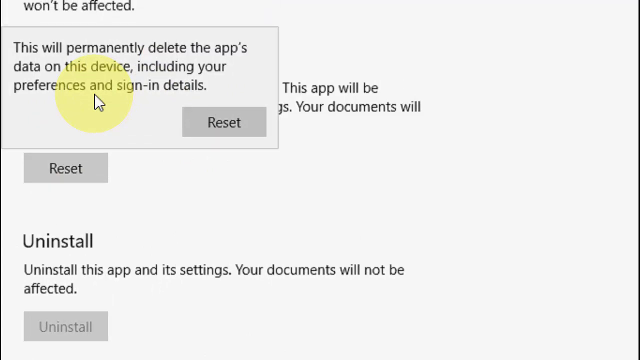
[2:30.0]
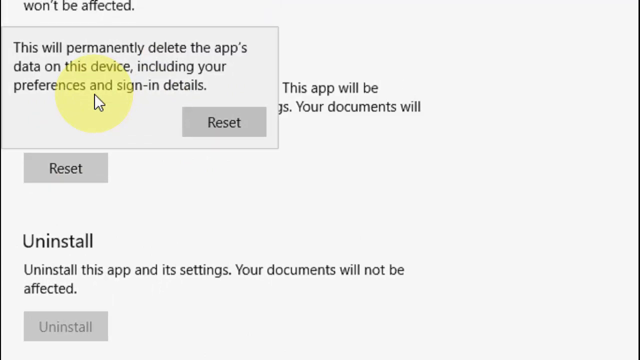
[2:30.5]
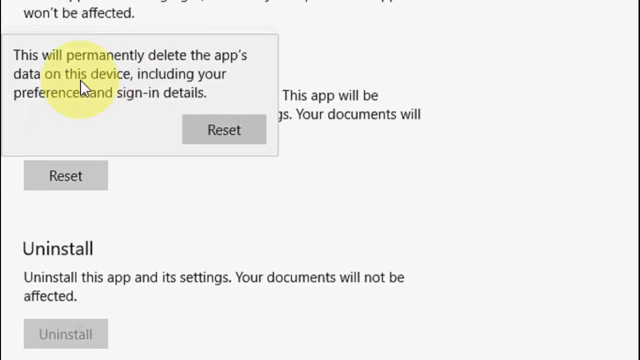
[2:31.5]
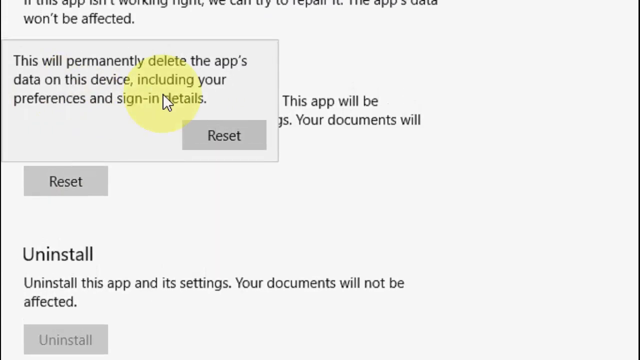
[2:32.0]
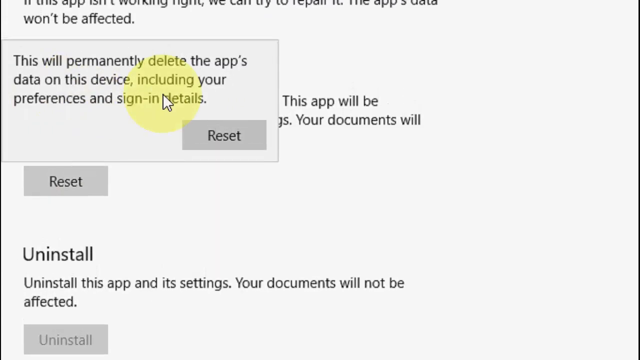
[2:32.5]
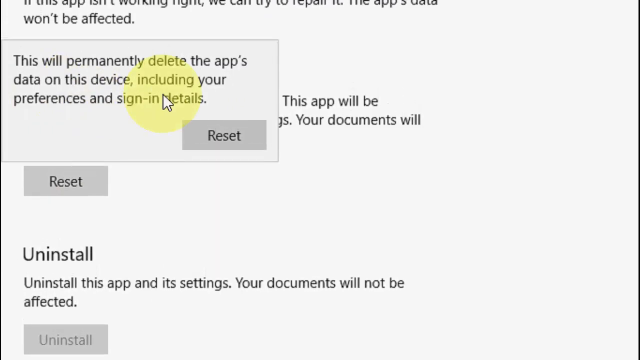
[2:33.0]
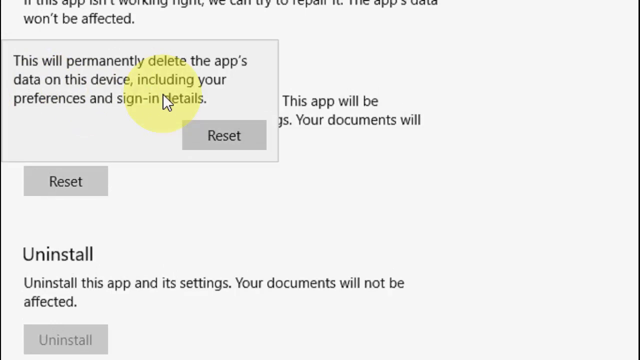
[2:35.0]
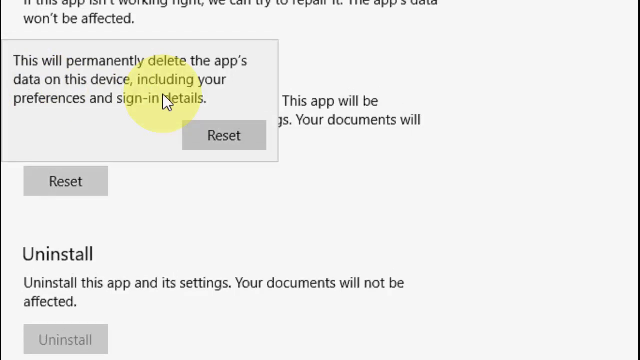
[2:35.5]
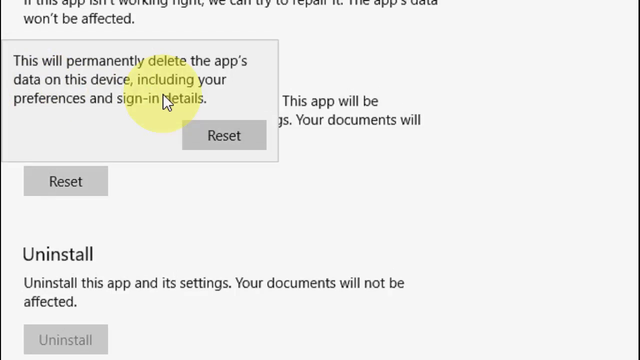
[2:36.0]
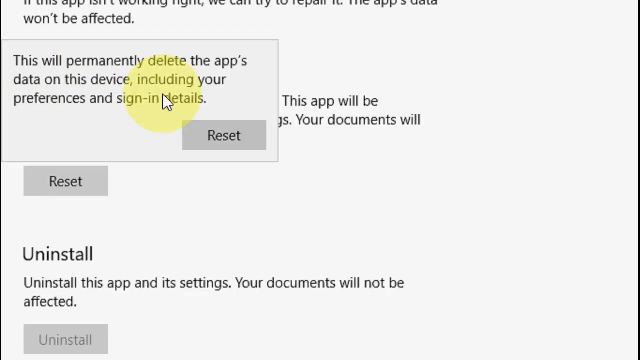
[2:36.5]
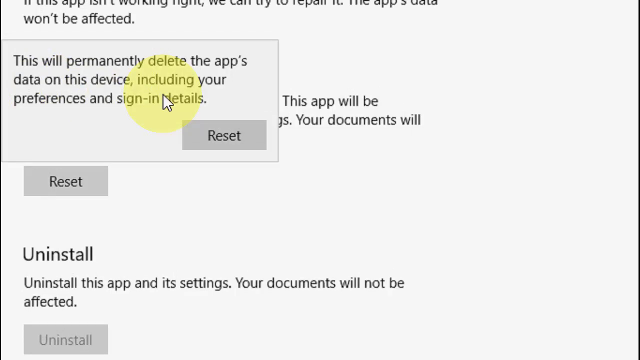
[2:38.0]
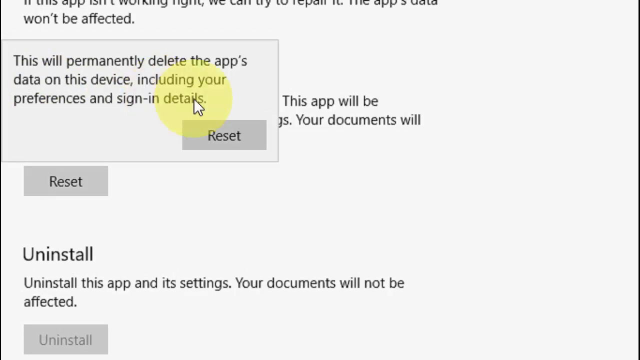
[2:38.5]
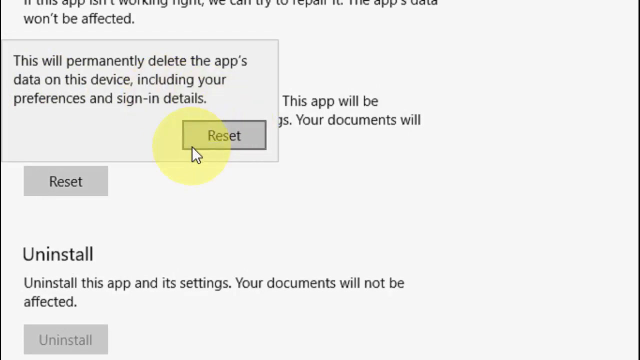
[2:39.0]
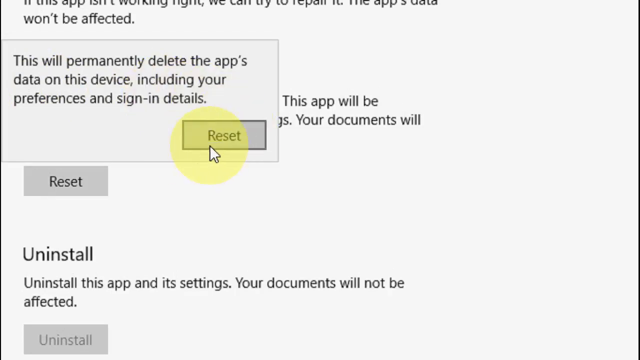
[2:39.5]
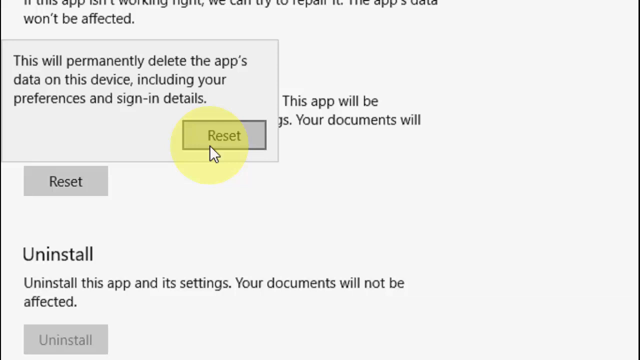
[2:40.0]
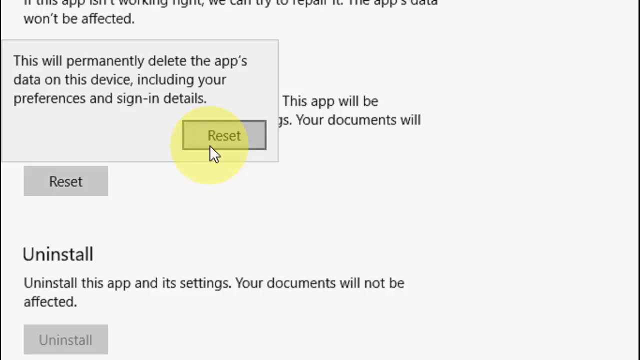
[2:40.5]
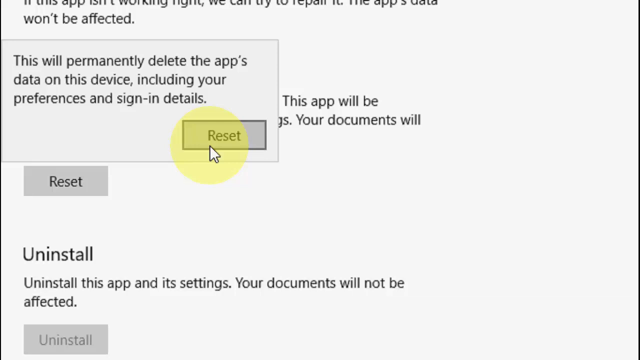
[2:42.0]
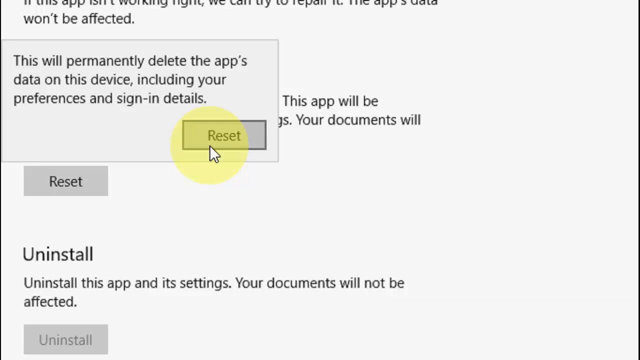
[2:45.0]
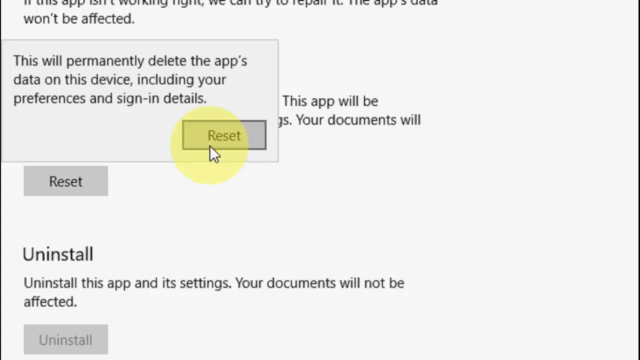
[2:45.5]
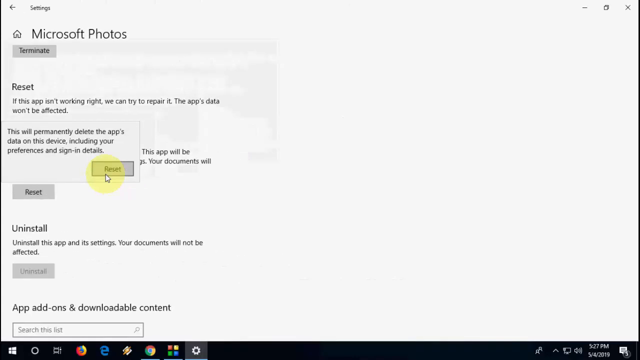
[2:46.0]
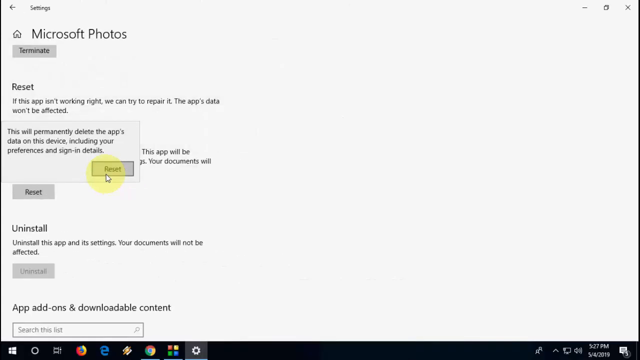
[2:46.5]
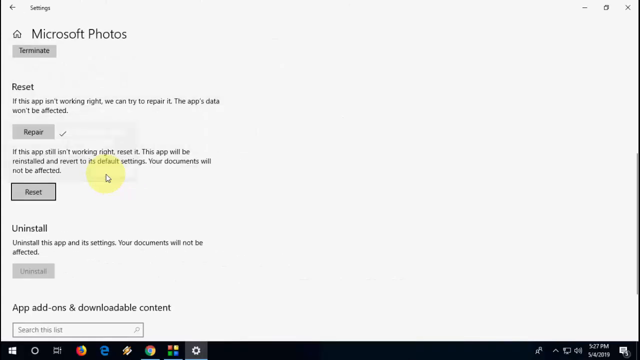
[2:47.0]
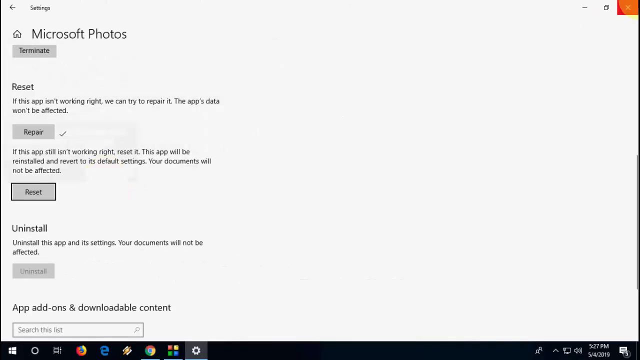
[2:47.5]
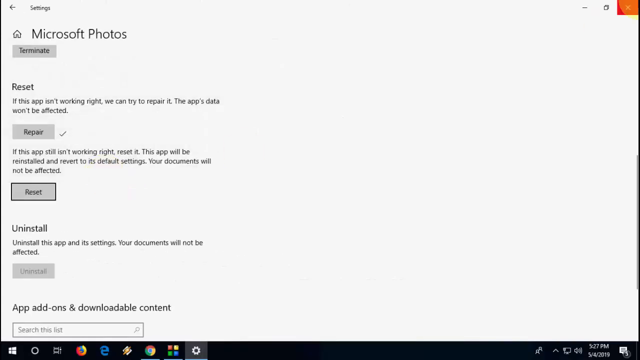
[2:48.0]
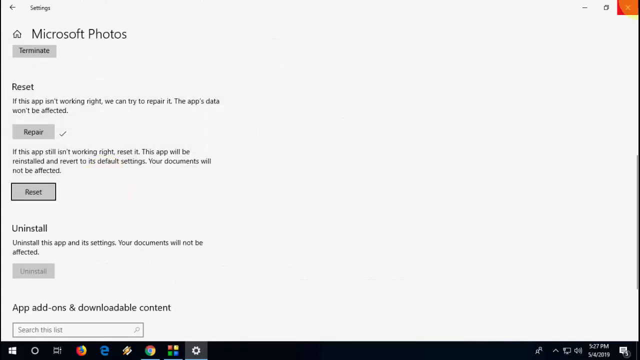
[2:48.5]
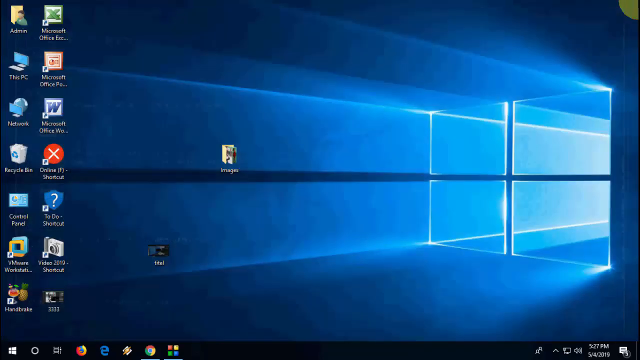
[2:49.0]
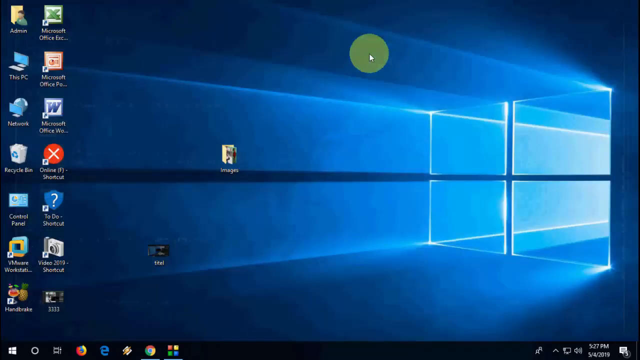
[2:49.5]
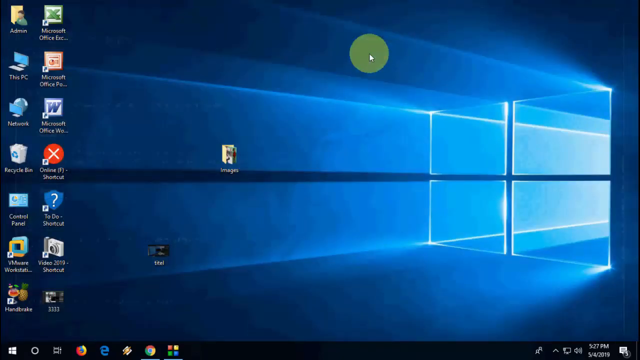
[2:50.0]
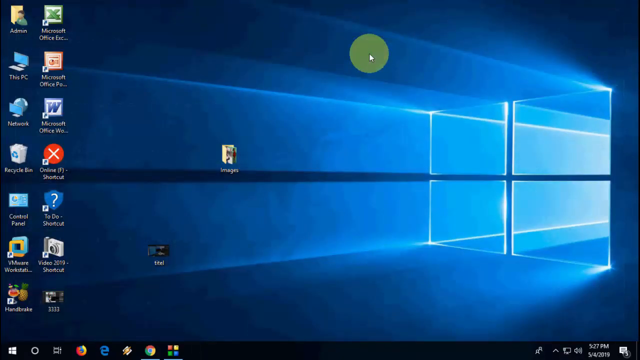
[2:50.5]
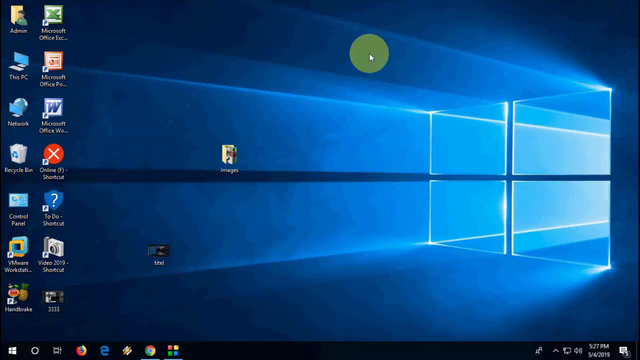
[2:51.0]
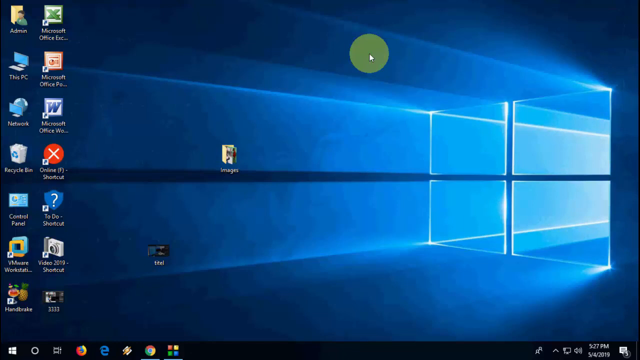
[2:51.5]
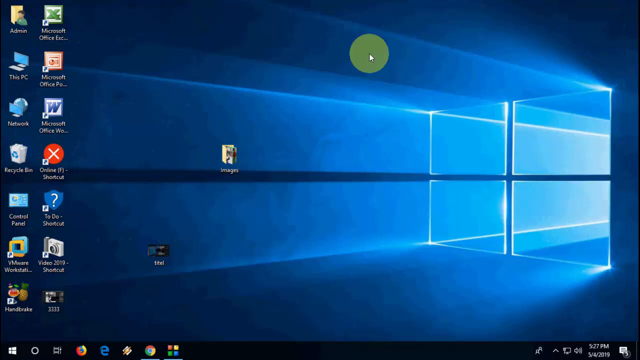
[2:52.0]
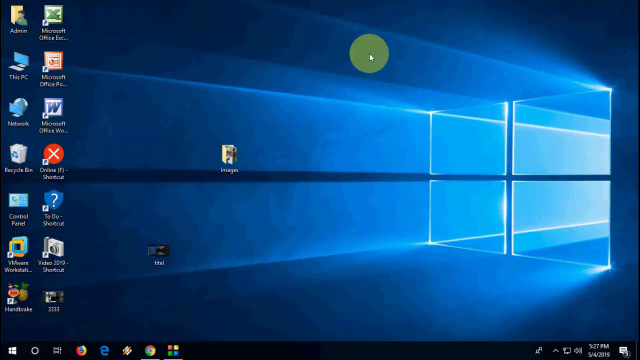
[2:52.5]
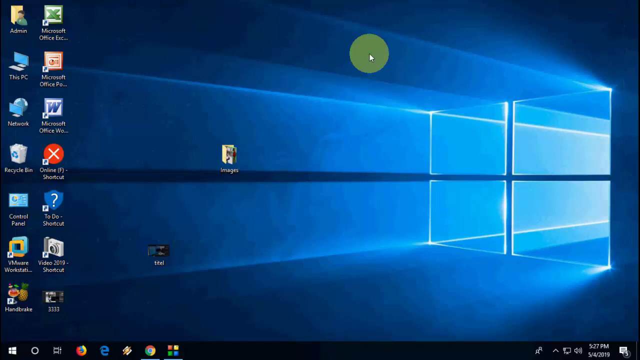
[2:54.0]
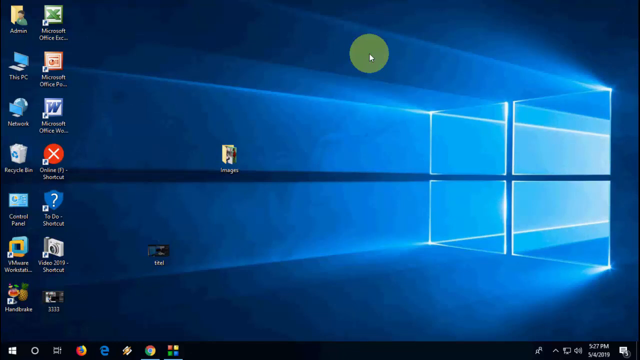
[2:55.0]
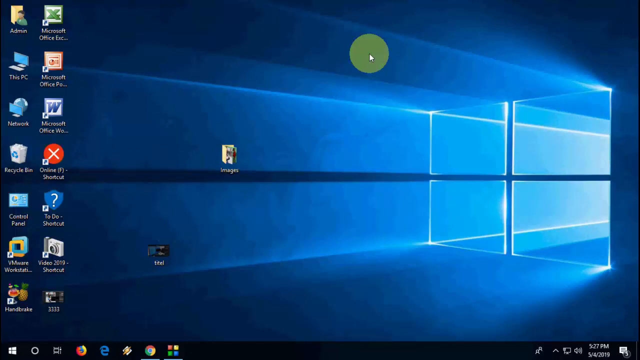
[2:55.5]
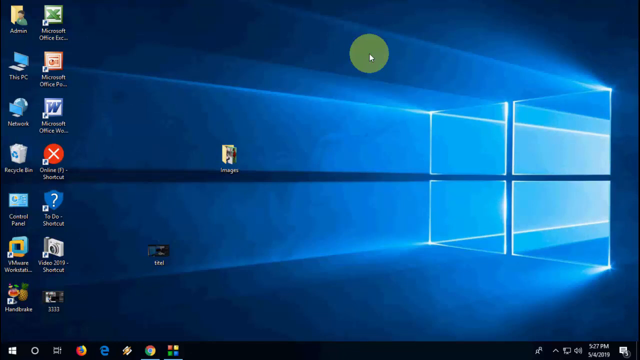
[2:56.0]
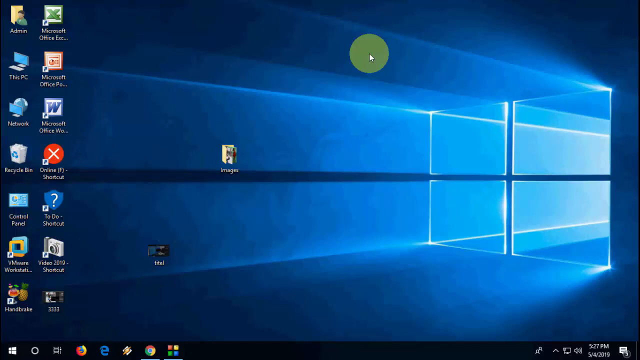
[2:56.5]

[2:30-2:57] After the reset button is pressed, a pop-up appears reading "this will permanently delete the app's data on this device, including your preferences and sign-in details". The user hovers over the pop-up and over the reset button for a while. The screen zooms out, and a tick appears to the right of the repair button, apparently indicating the application has been repaired. The user moves the mouse to the close button at the top right and closes the window, returning to the desktop. Most of the desktop icons are aligned on the left side in two columns, except for the two shortcuts the user was working with, the picture and the images folder. On the left side are folders such as admin and apps such as This PC, Network, Recycle Bin, Control Panel, Microsoft Excel, PowerPoint and WED.